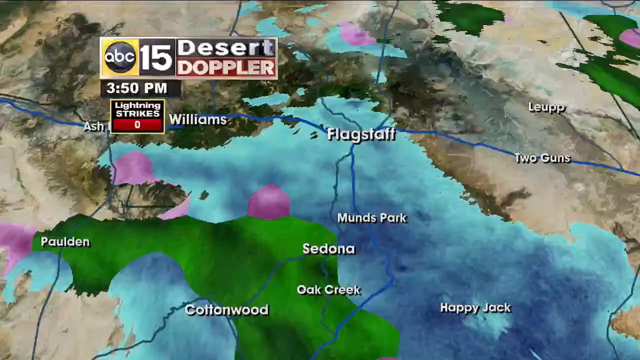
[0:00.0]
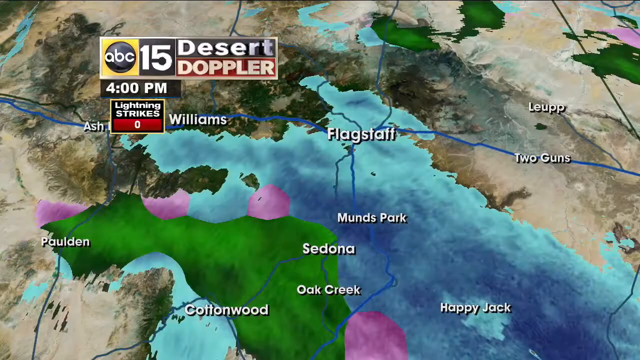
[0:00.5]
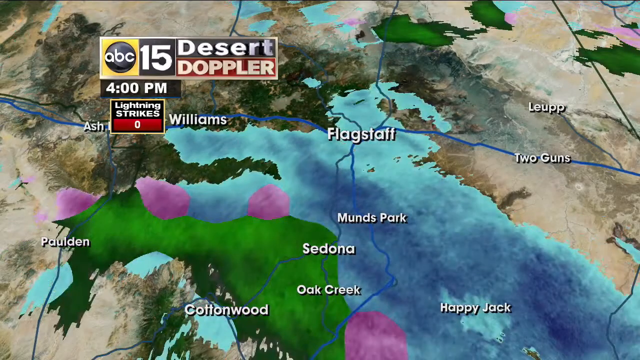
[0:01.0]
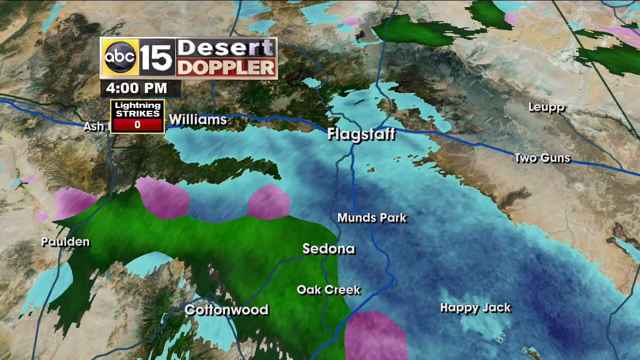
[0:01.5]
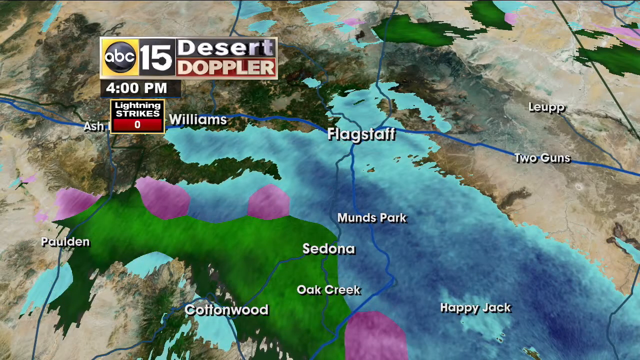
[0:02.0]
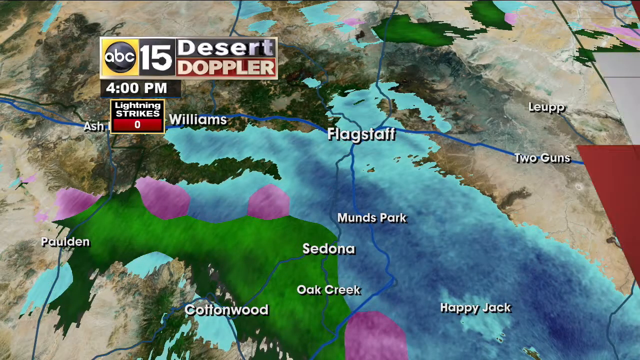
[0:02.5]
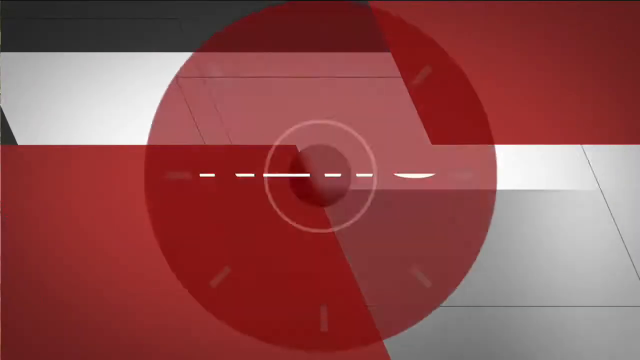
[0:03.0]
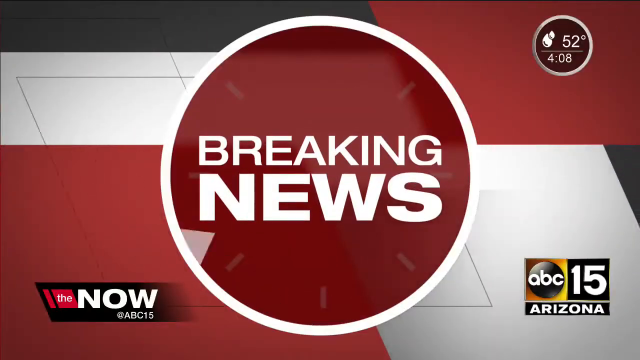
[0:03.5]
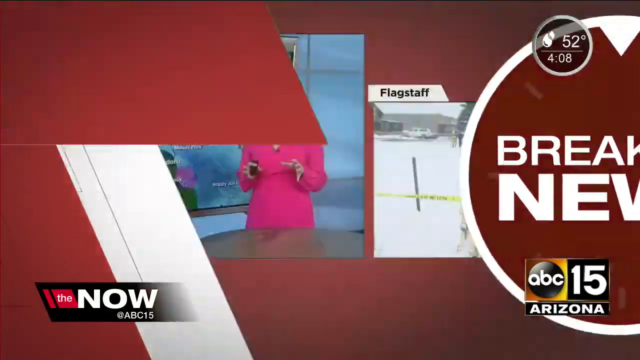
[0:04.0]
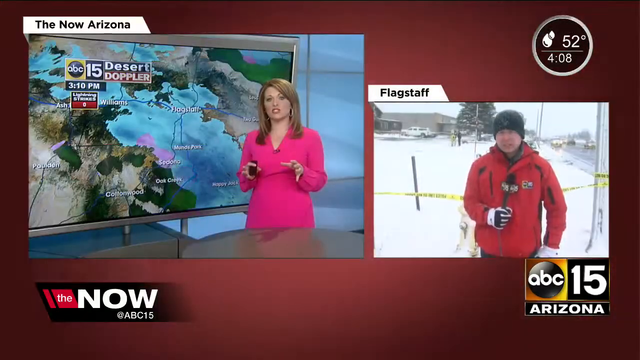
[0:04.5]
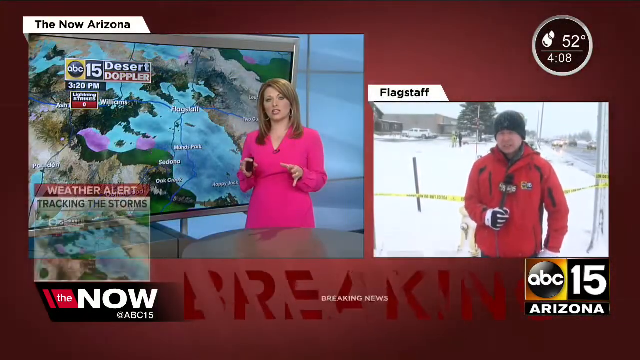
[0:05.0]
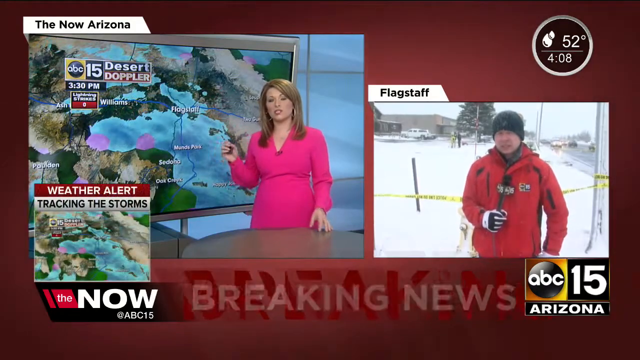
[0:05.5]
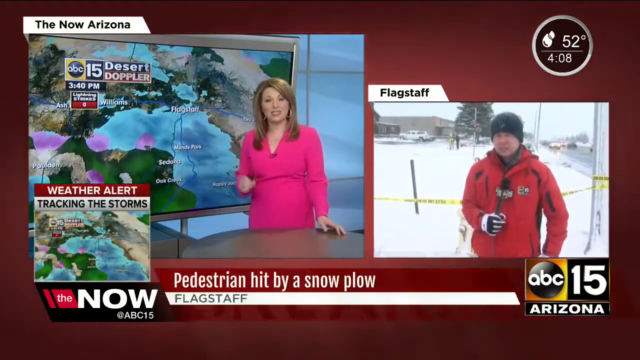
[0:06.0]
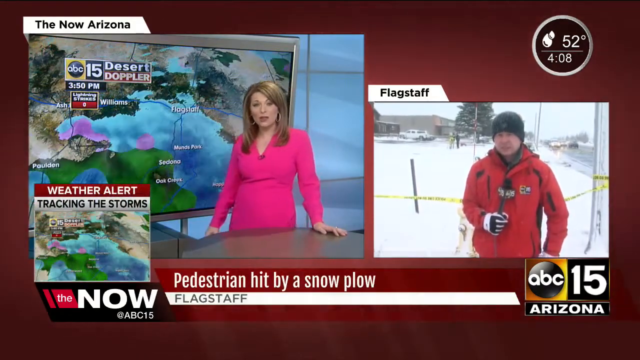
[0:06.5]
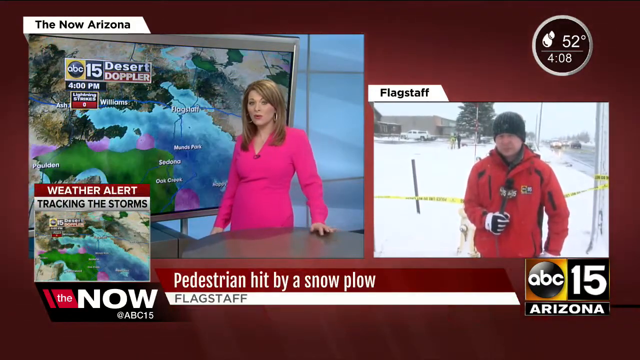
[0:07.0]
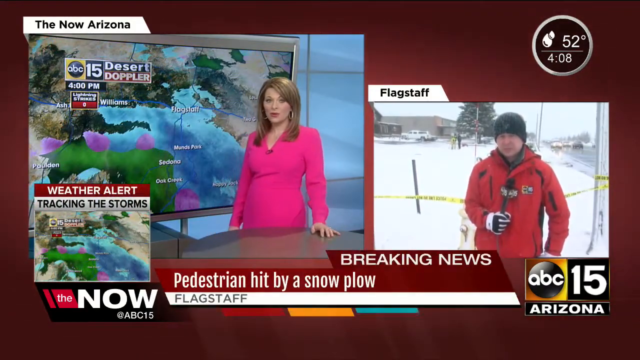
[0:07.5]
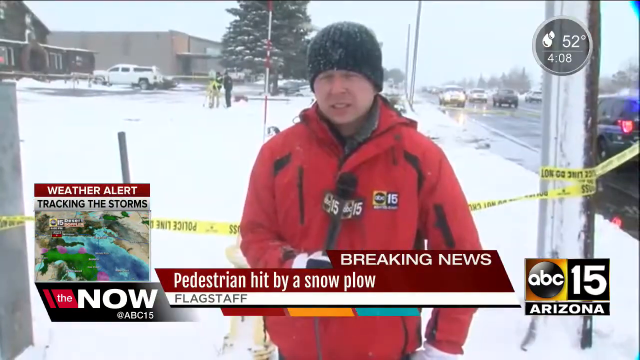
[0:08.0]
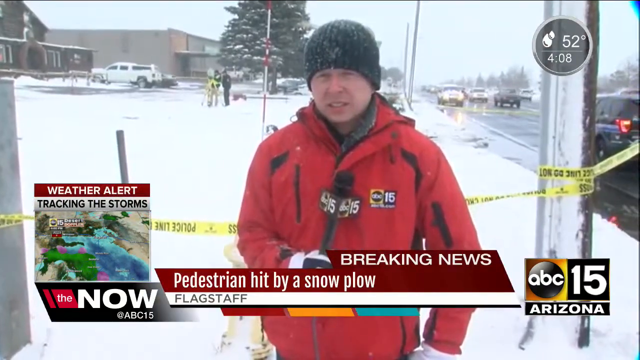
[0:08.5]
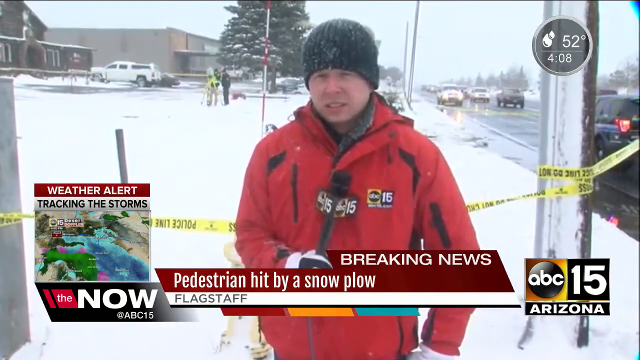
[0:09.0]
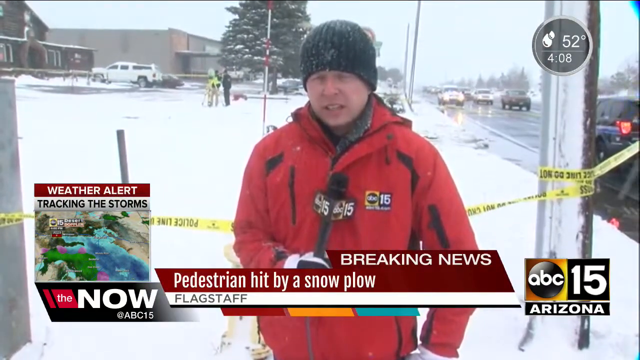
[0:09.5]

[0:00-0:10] What appears to be a segment from ABC 15 covers the weather. A digital map on the screen looks like it shows the Arizona area, and they seem to be counting lightning strikes; Sedona, Oak Creek, and Paulding are all in a green area on the map. An intro then comes on in a circle that says "breaking news". Next, three different screens appear. In one, a female news anchor stands in front of a digital camera with the same map up, showing the green area around Sedona, Arizona. Underneath it, another small box holds a clip that says "weather alert tracking storms". A third square holds a clip of what looks like an anchorman out in the field in Flagstaff, with a lot of snow behind him; he wears a red coat and a beanie and has a microphone. A line pops up at the bottom reading "pedestrian hit by a snow plow". The man in the red jacket then takes up the whole screen, standing right behind police tape that is kind of stacked against a number of poles, and in the distance there appear to be some police officers.